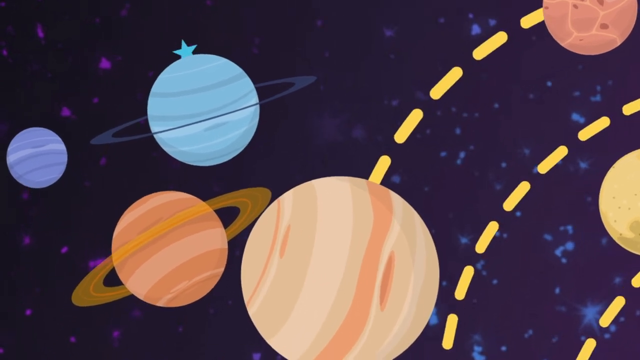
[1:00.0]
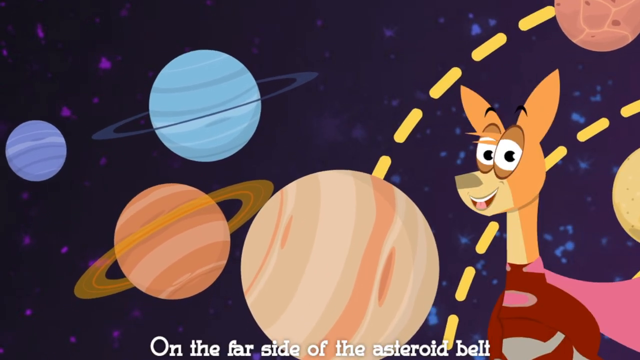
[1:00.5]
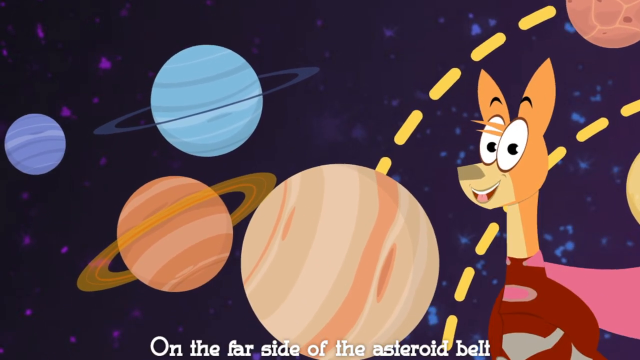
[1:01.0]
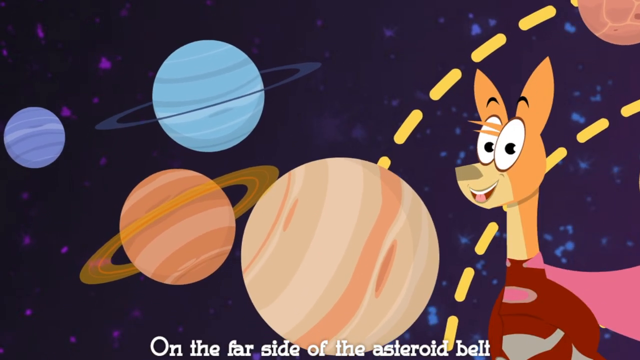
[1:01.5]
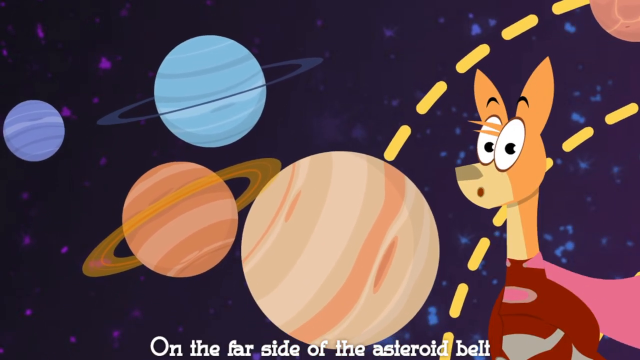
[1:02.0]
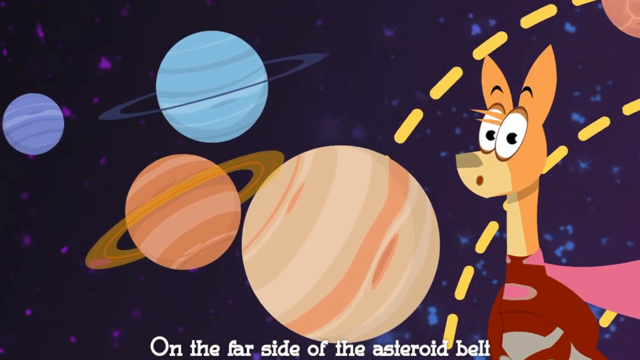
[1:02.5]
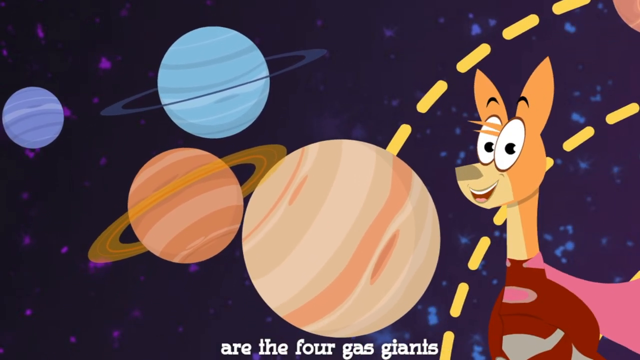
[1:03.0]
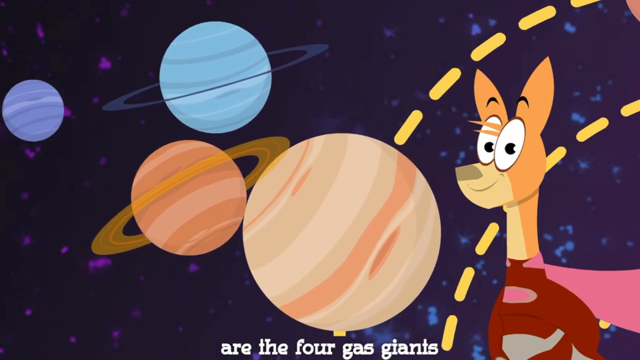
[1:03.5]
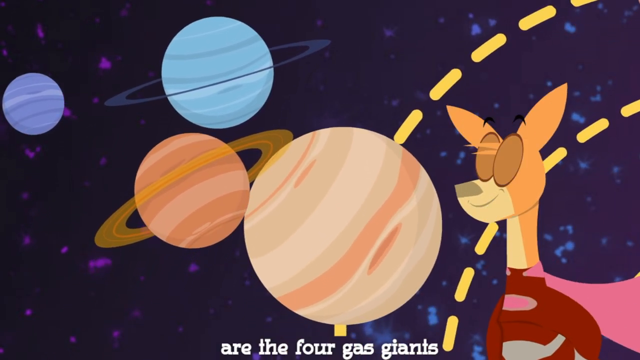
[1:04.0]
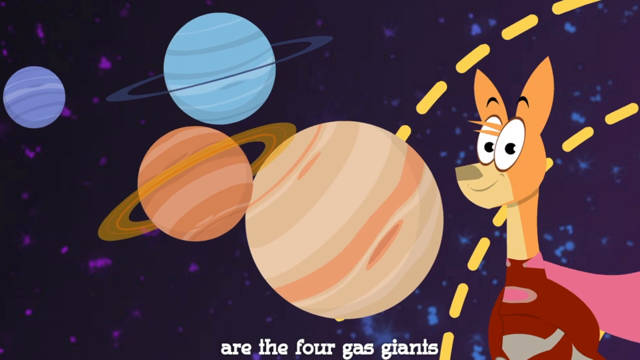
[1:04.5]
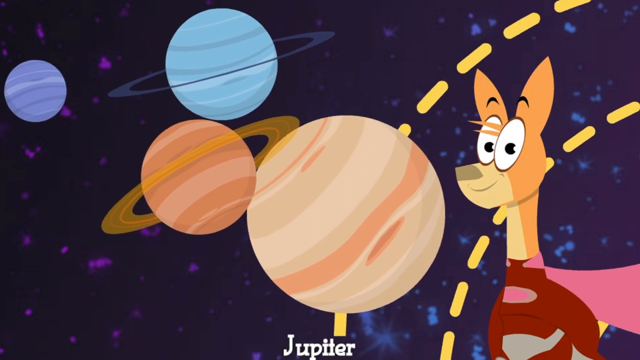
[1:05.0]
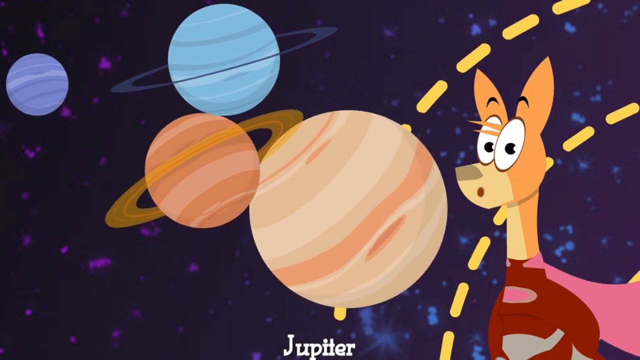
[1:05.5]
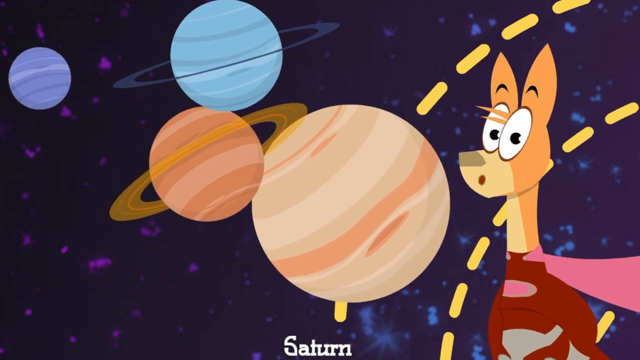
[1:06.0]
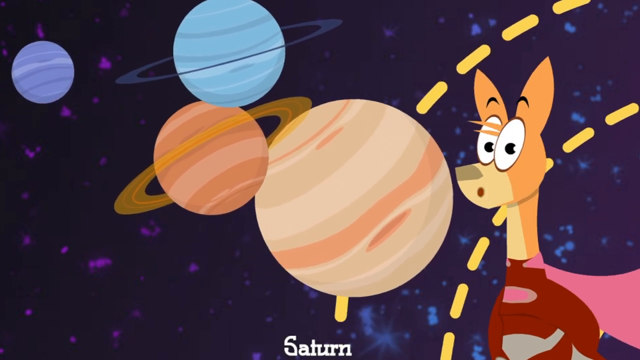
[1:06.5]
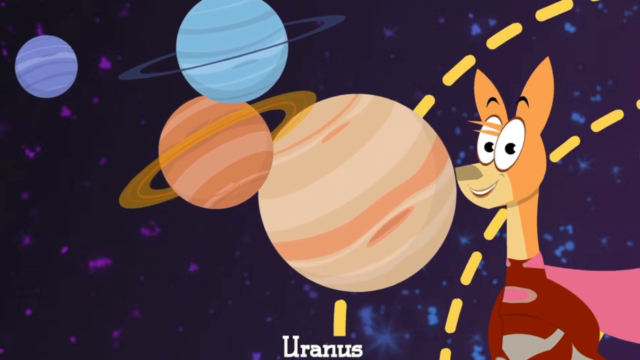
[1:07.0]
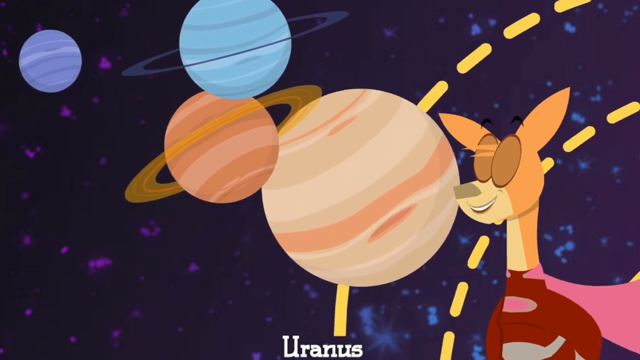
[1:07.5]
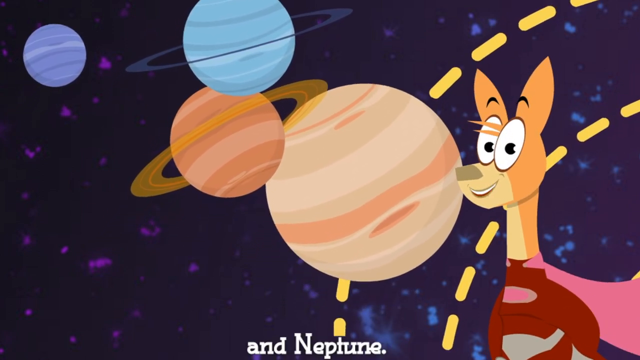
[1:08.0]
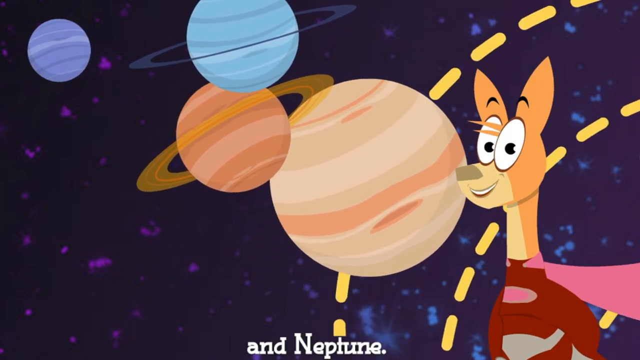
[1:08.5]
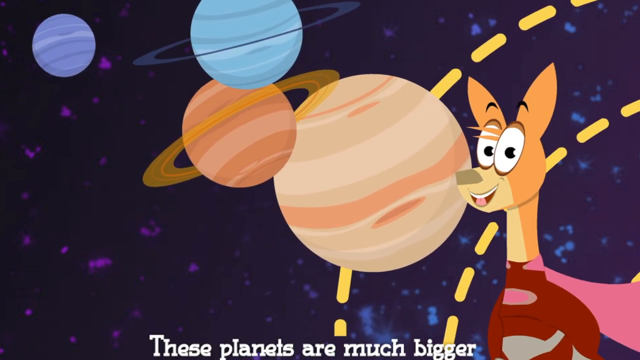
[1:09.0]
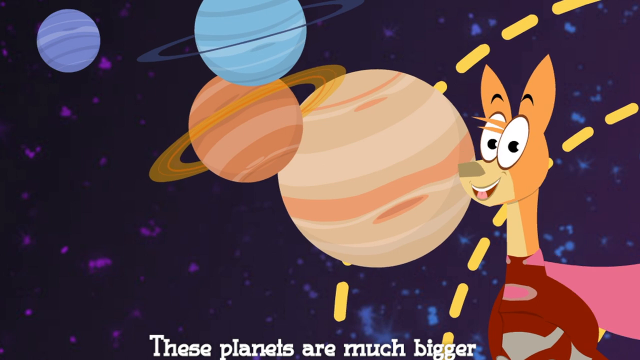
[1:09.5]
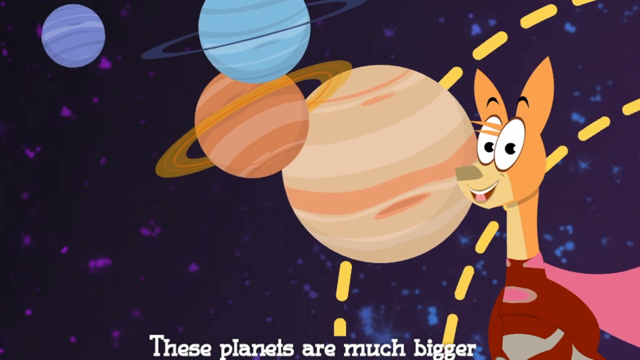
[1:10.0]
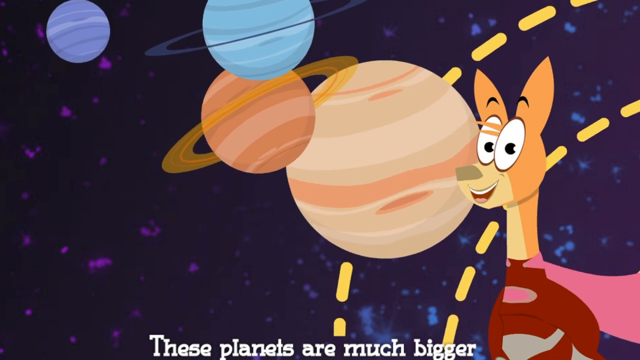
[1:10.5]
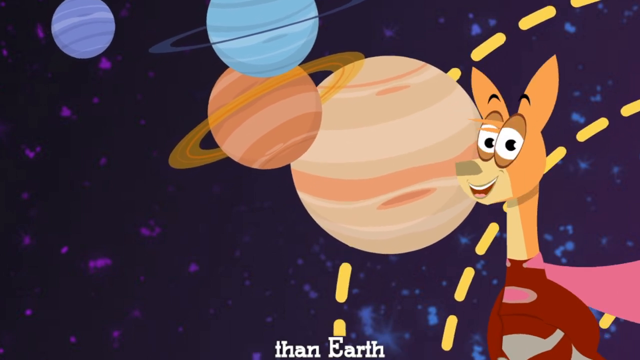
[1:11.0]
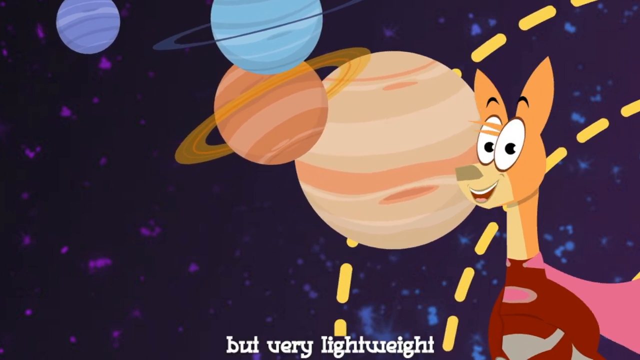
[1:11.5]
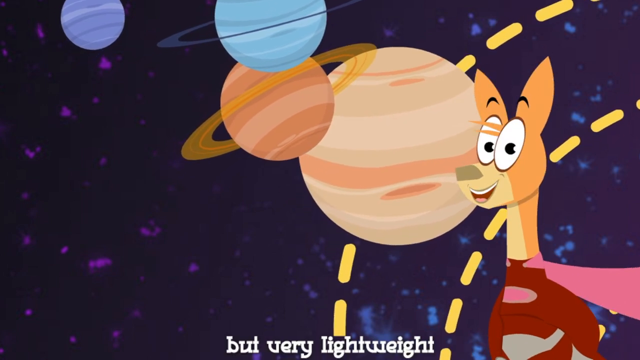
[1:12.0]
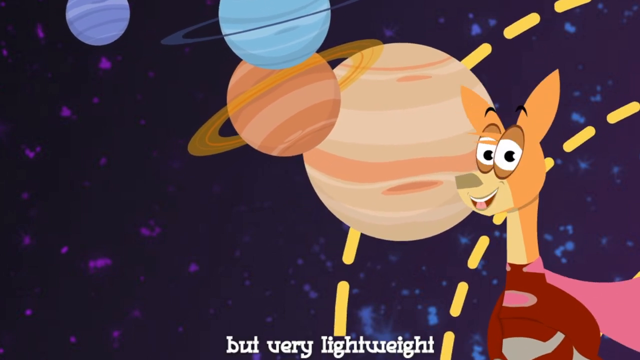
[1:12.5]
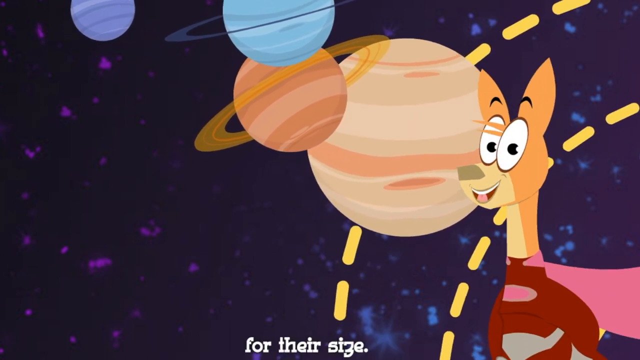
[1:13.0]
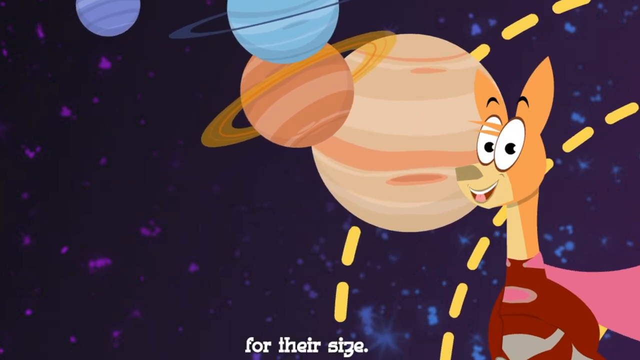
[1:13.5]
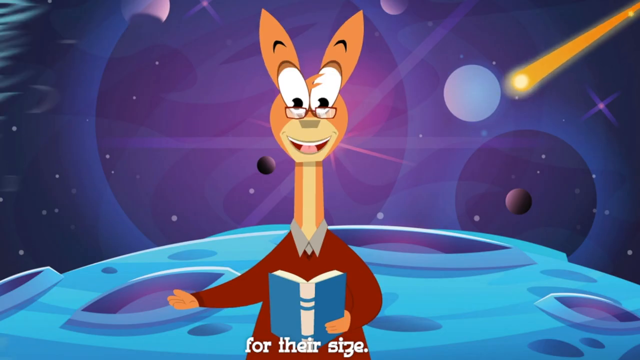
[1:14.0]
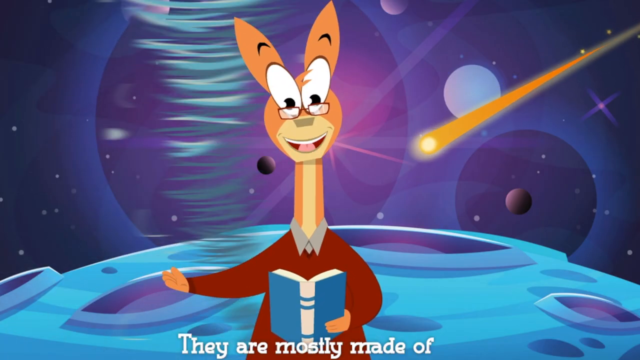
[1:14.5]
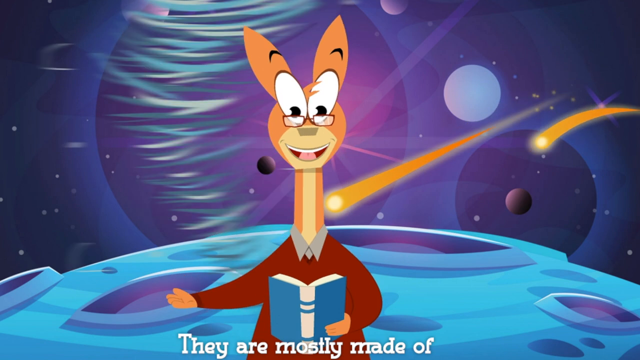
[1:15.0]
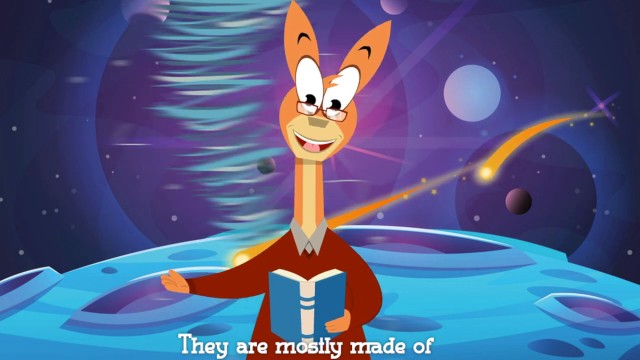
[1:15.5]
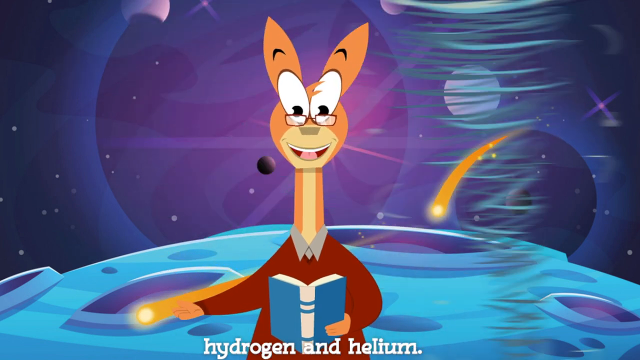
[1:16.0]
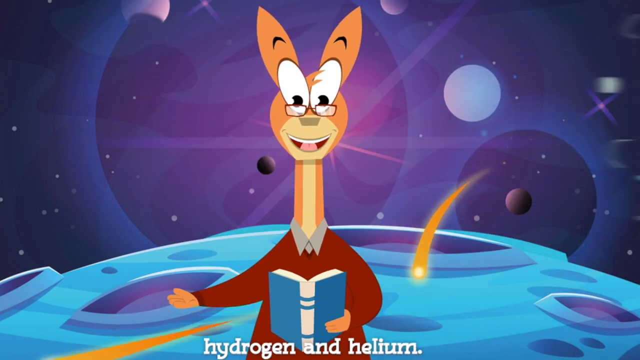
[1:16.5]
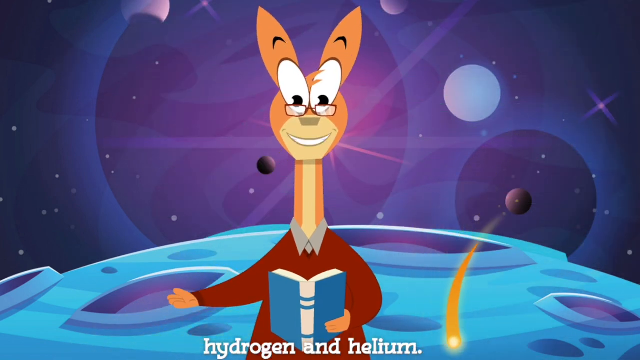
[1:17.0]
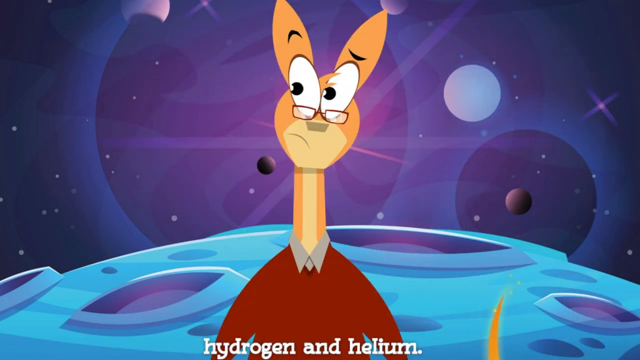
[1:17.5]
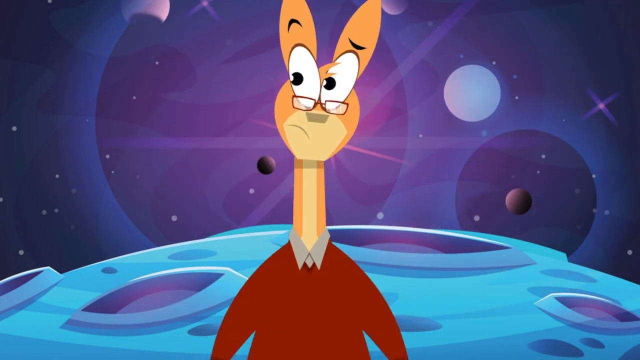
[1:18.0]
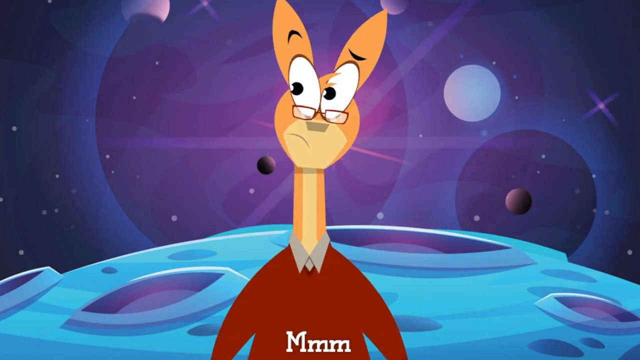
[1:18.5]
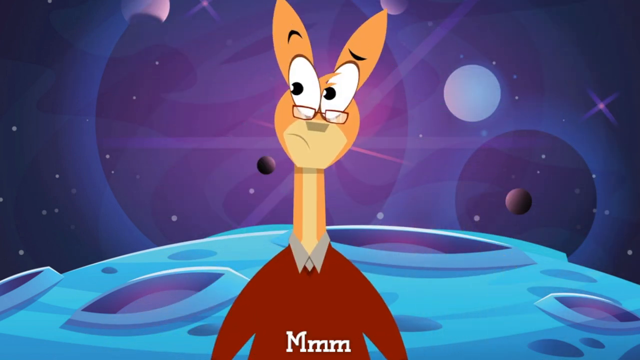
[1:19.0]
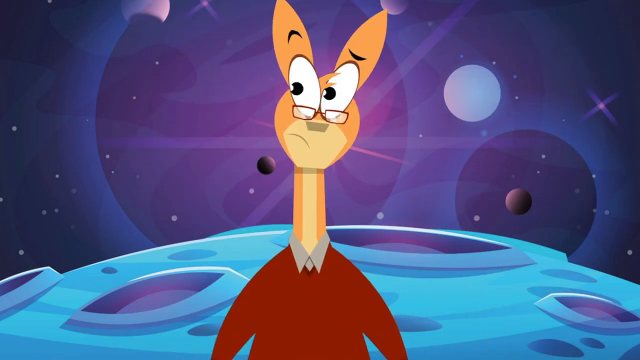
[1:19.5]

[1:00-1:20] The scene cuts to a zoom into the planets of the solar system, rendered in a cartoon fashion. The background is black and blue with a gradient effect that changes colors from left to right. The deer appears on the right side of the screen, looking at the camera and blinking a couple of times as he talks to the camera. The planets move very slowly from the bottom of the screen to the top while rotating on their own axes. The scene then cuts to the deer out of costume, wearing his red shirt and gray collar and holding a blue book. The planet with the craters reappears. Shooting stars, comets and space debris move rapidly behind him, and a tornado or twister moves from the left to the right side of the screen behind the deer.